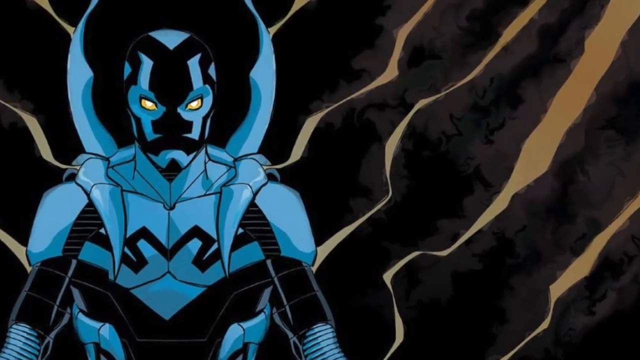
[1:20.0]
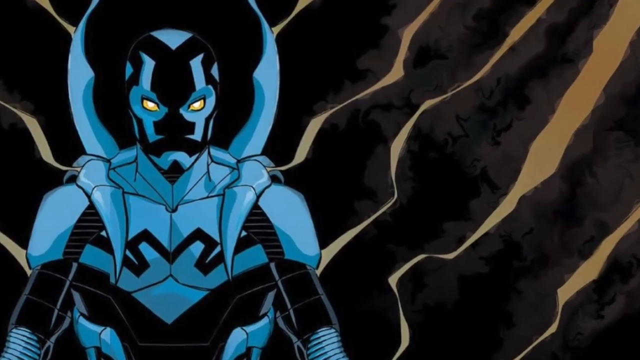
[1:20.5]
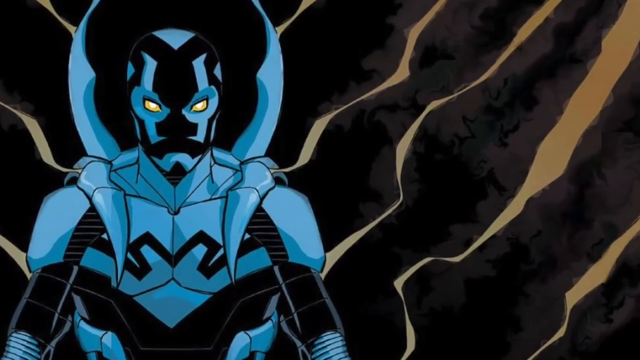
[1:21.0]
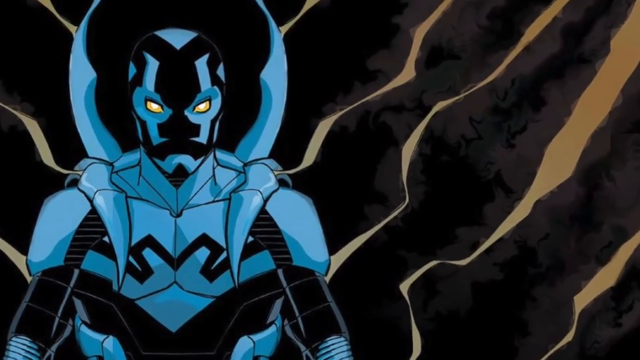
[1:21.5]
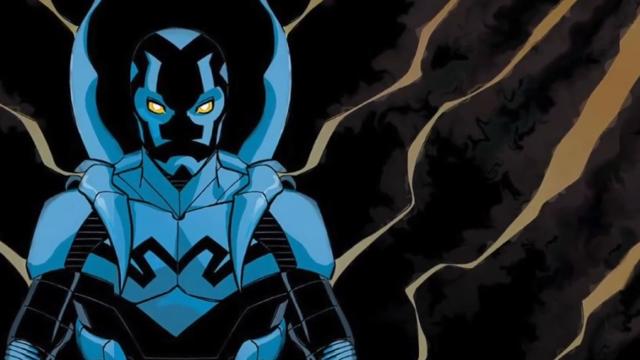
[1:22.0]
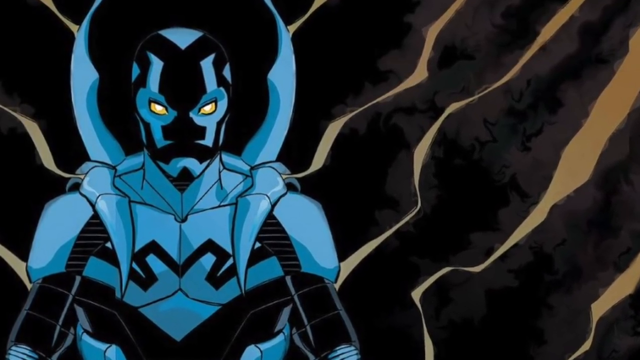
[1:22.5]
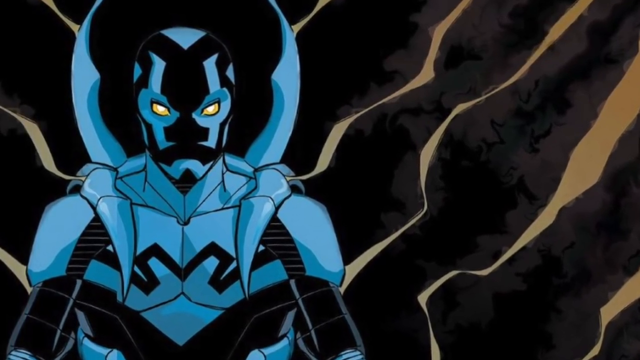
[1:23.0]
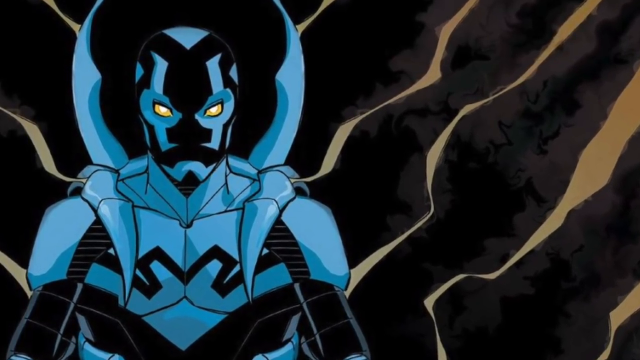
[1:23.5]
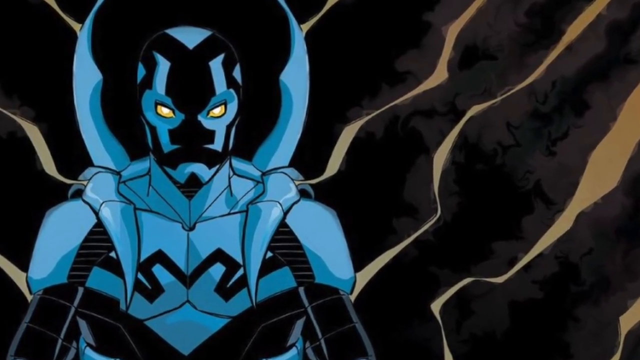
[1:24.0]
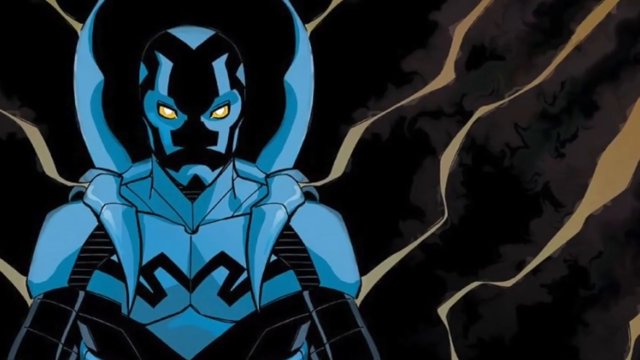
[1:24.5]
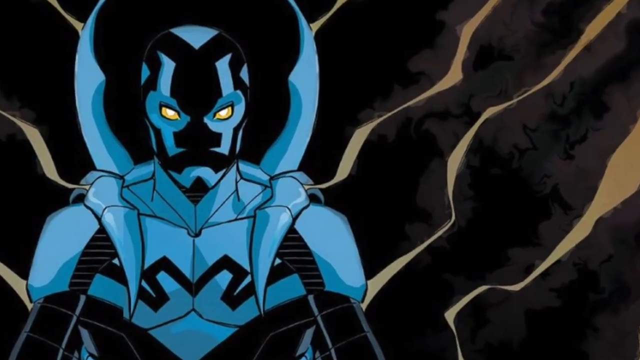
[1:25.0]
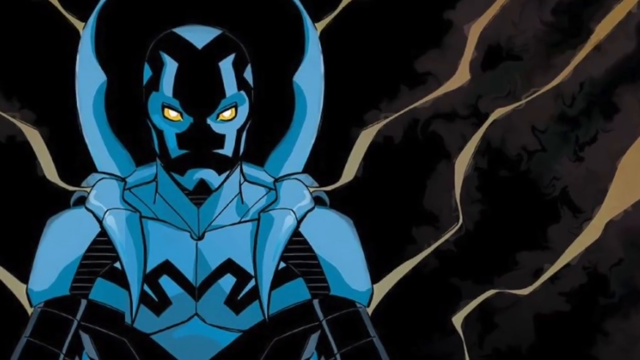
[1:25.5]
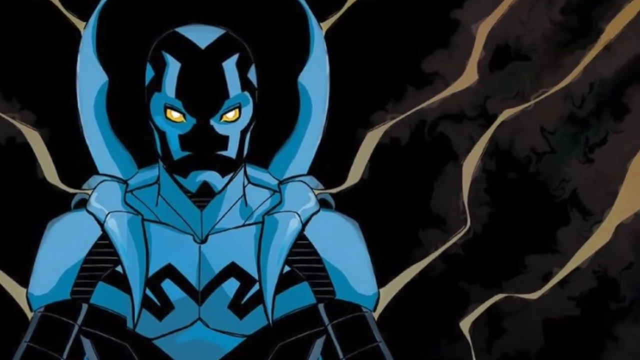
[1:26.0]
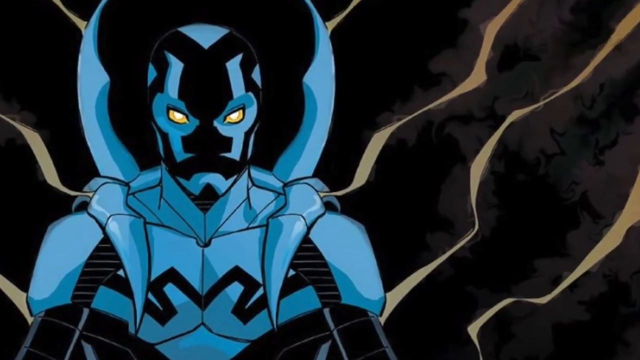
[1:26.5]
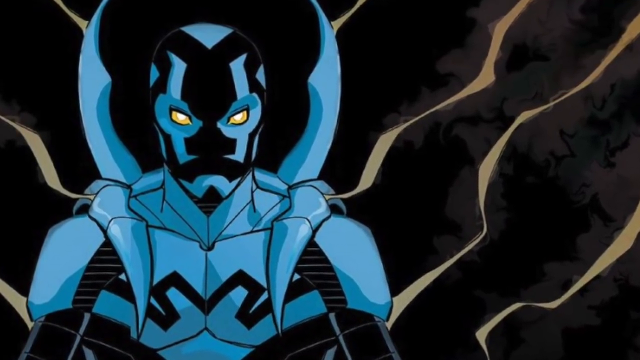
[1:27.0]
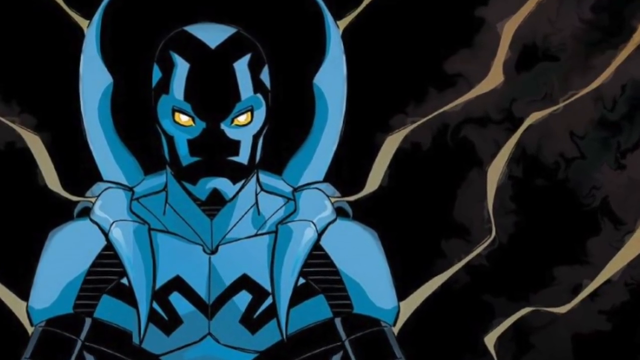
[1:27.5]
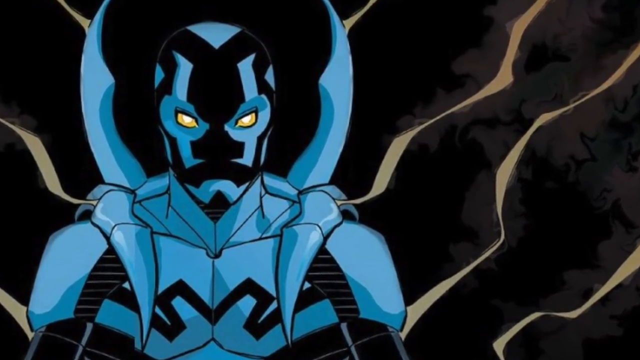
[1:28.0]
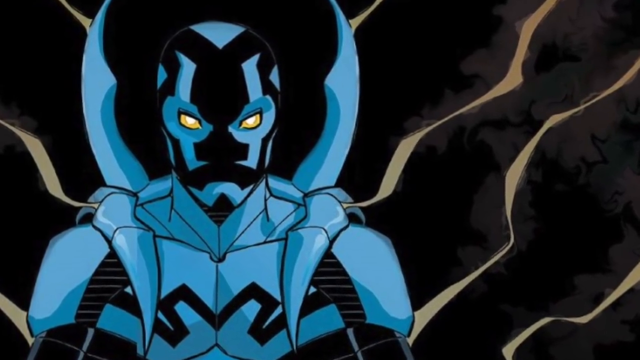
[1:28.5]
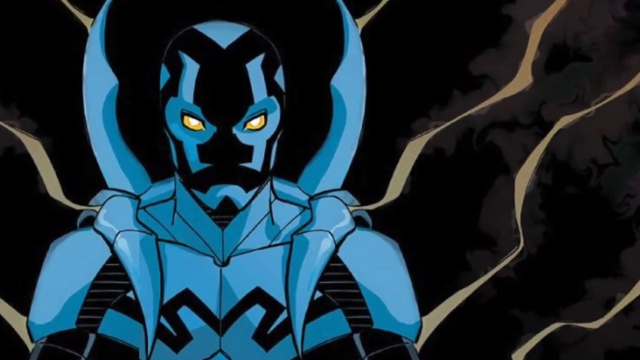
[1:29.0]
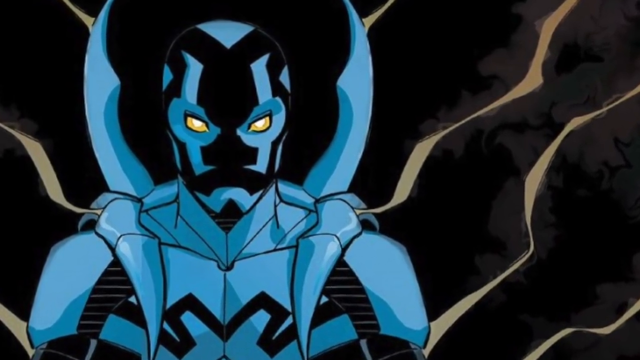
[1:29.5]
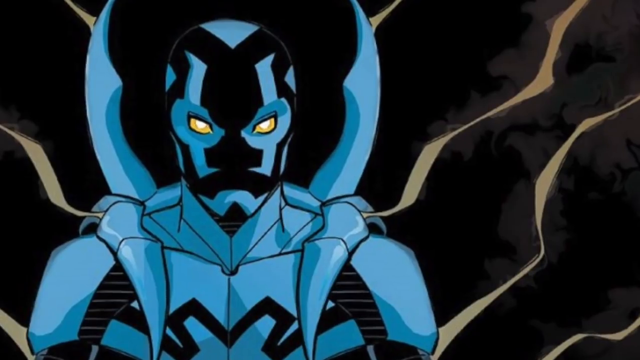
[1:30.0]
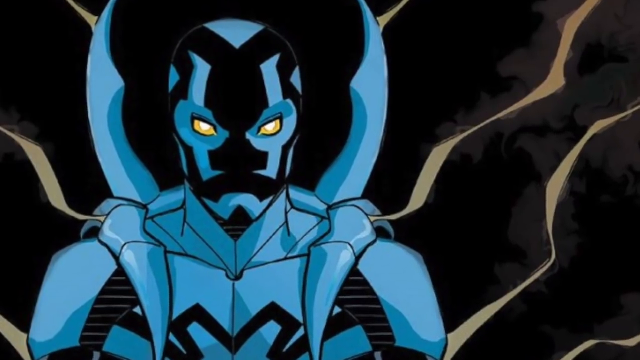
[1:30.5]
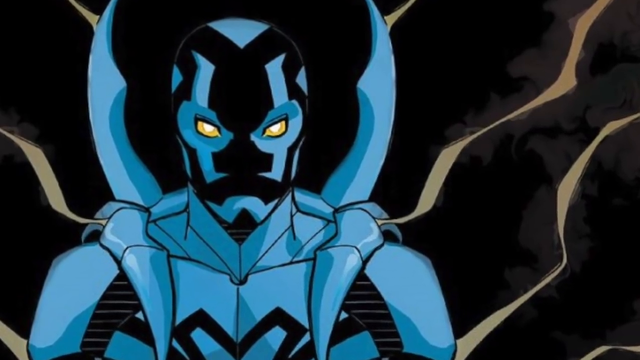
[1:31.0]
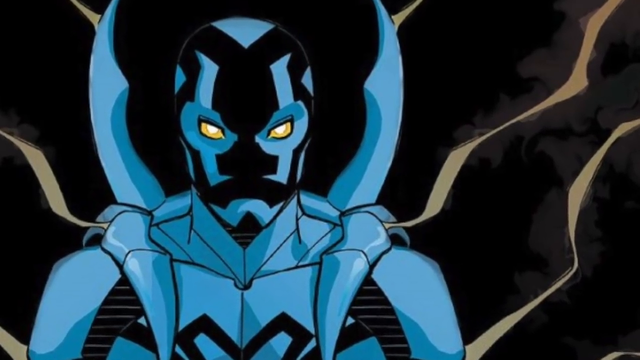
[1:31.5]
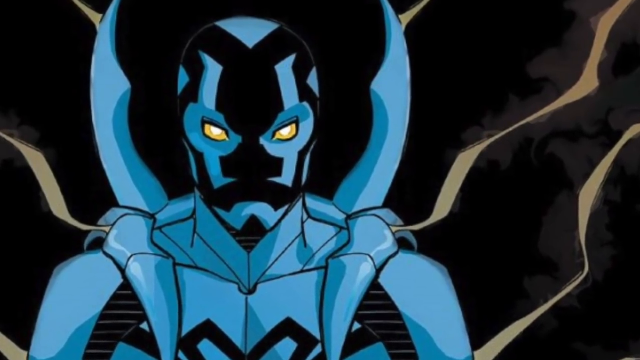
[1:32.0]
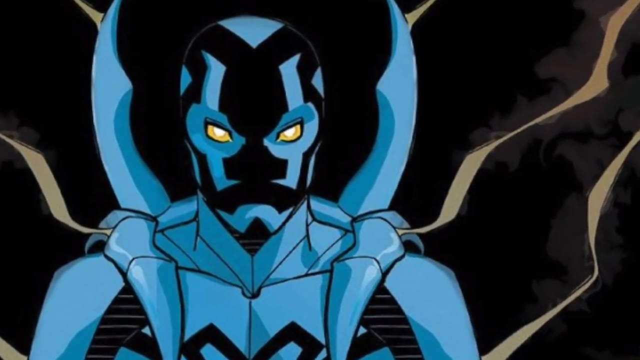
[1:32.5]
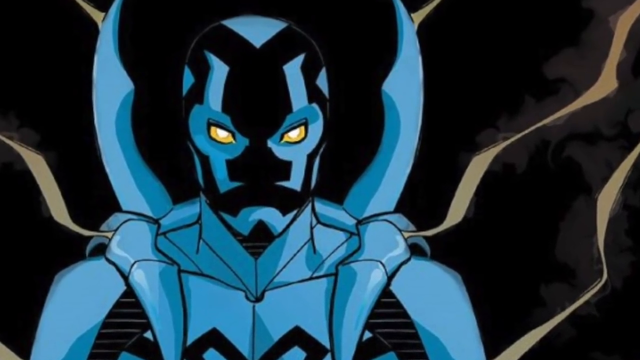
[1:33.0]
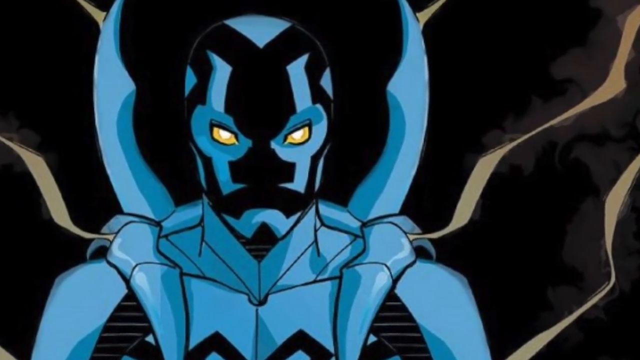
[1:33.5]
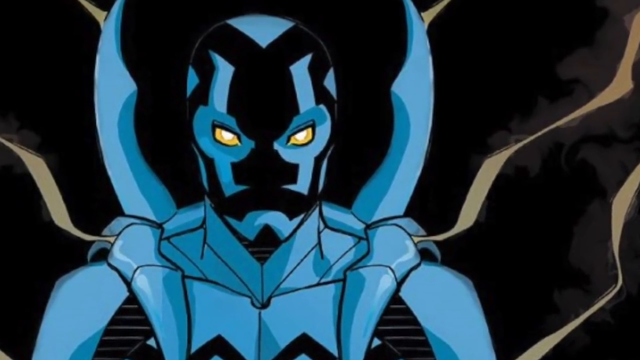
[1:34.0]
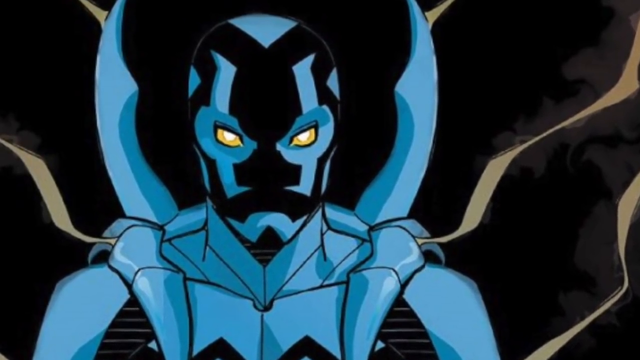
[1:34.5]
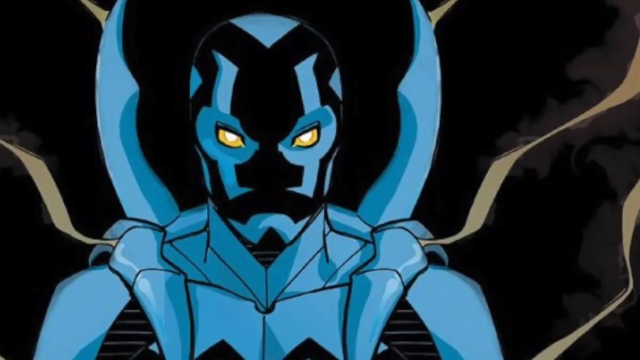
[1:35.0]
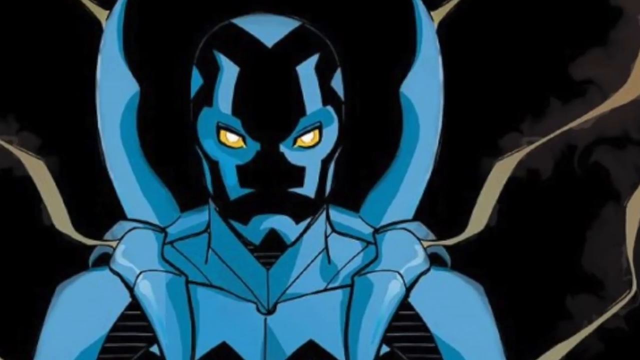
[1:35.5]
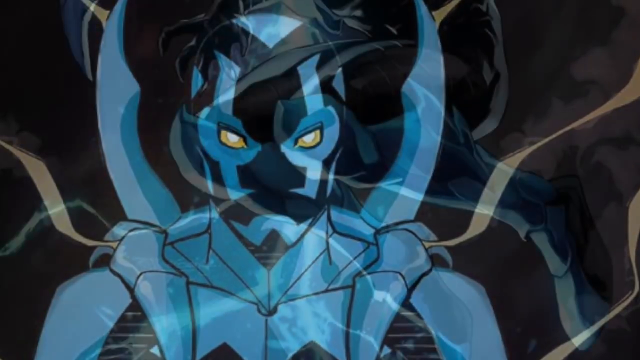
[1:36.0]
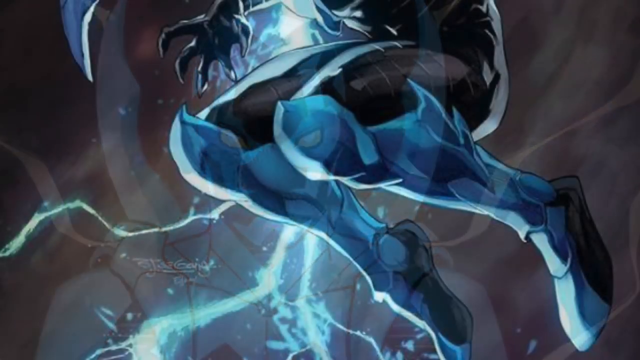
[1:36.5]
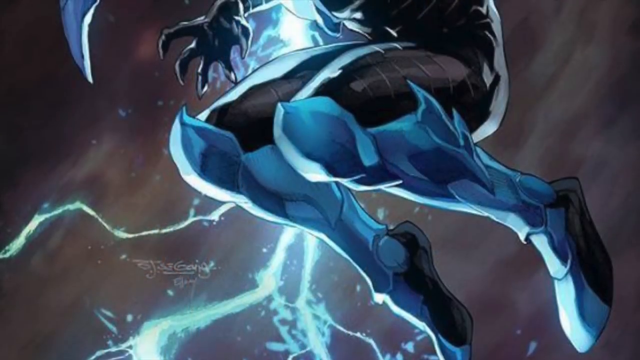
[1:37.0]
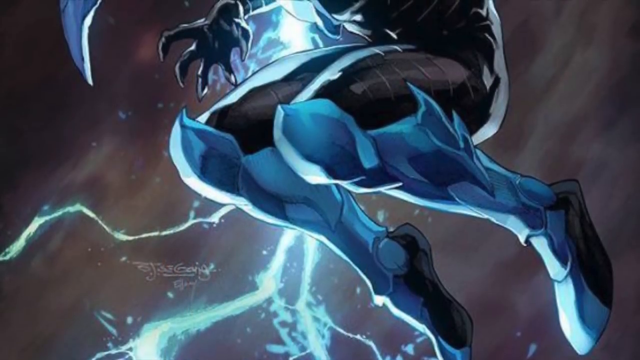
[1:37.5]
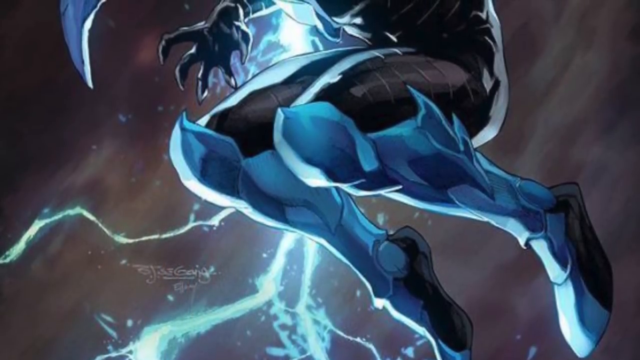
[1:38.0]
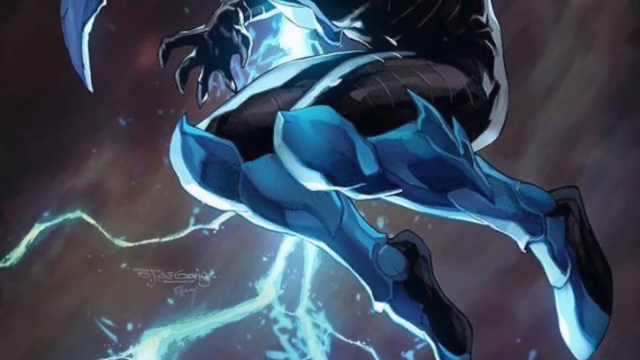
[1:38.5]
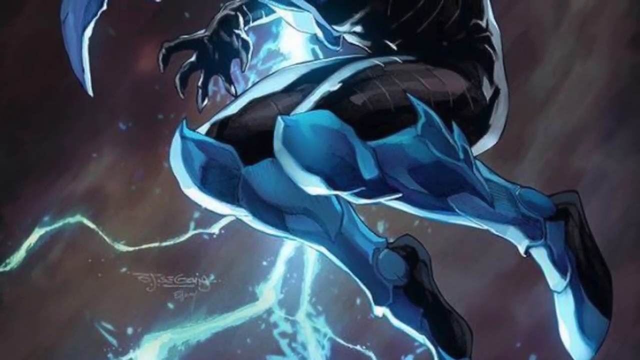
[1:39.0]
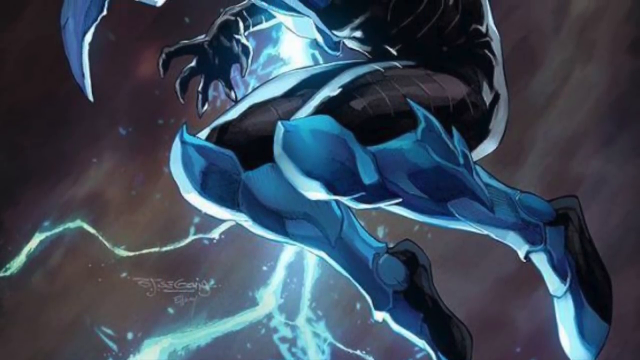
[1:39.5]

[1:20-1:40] The 2D animated character in cyan and black armour looks directly into the camera, very symmetrical, with menacing gold eyes. The camera zooms in on the face, showing more detail. The scene then cuts to a new one, potentially the same character in a different animated style. Only the legs and a hand of this superhero are visible, again in cyan and black, with heavy armour on the legs. The character appears to be in space, with a space background. The camera kind of goes upwards, showing more and more of the body, but does not quite reach the face.